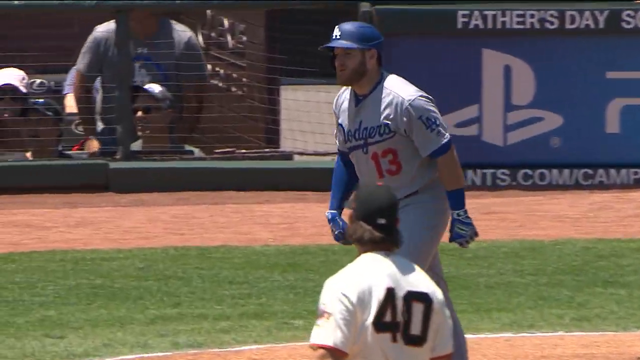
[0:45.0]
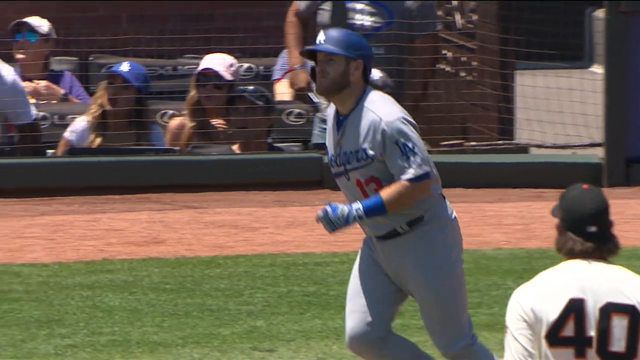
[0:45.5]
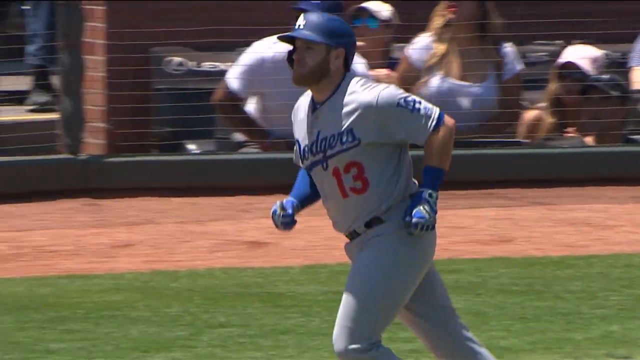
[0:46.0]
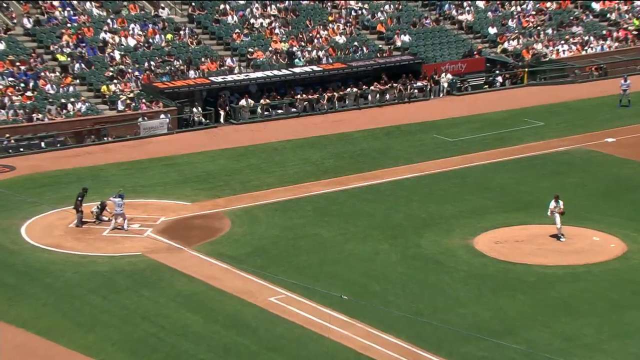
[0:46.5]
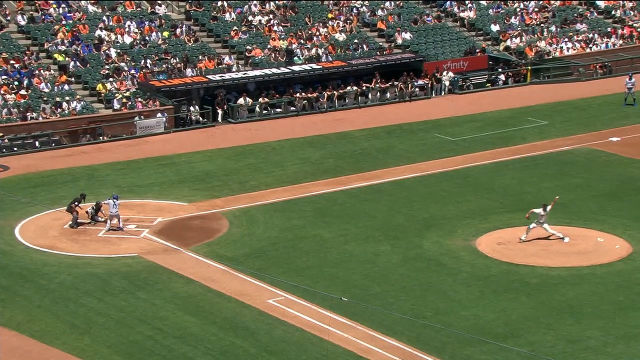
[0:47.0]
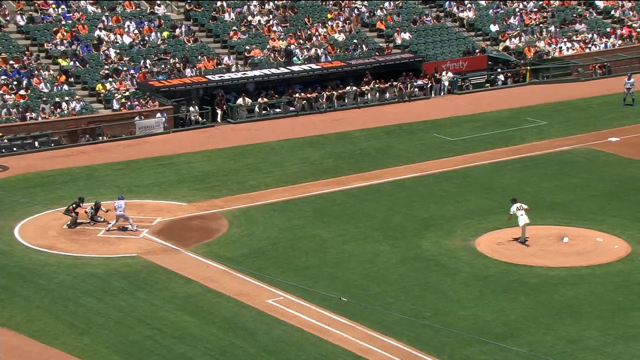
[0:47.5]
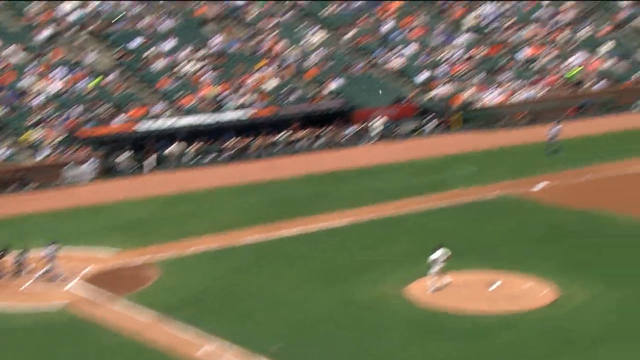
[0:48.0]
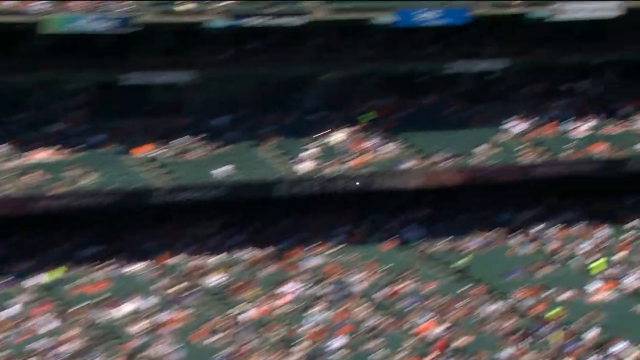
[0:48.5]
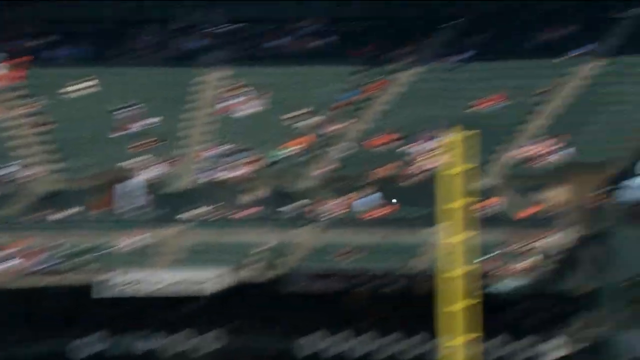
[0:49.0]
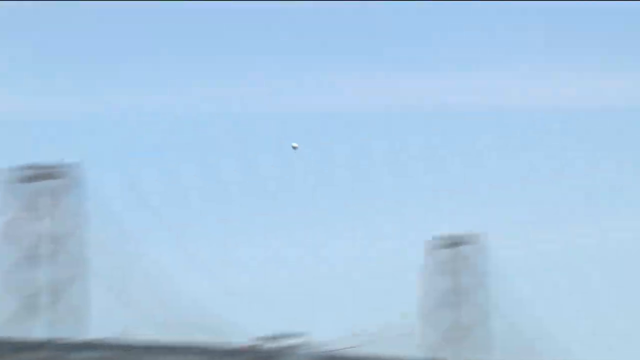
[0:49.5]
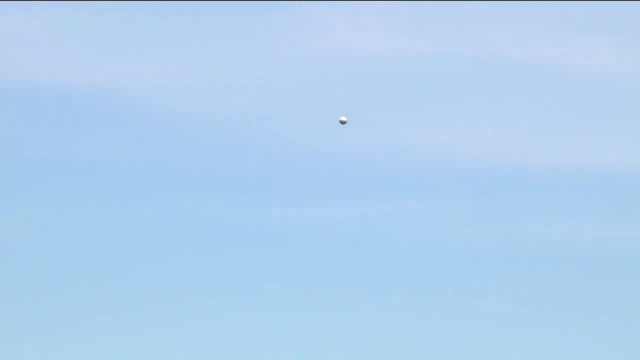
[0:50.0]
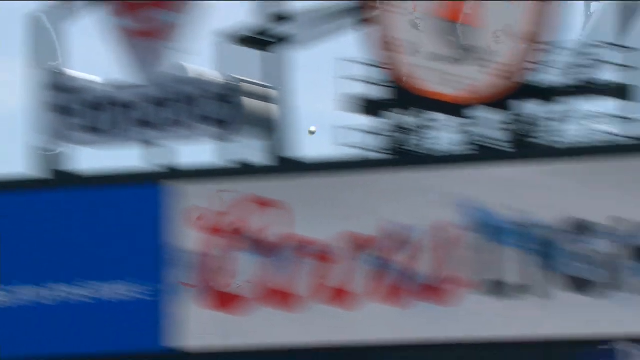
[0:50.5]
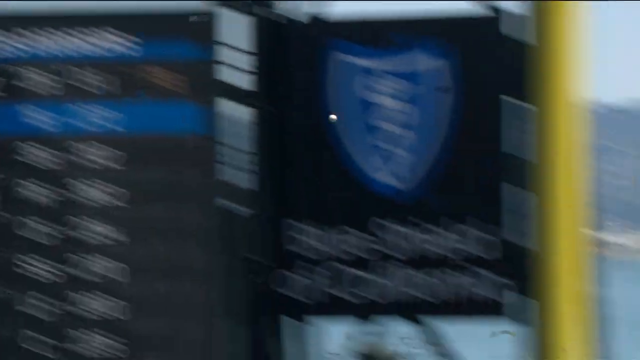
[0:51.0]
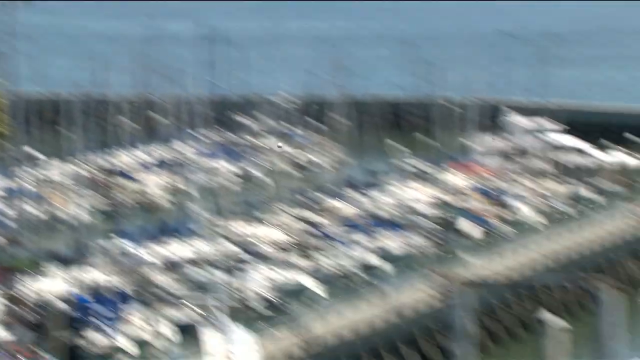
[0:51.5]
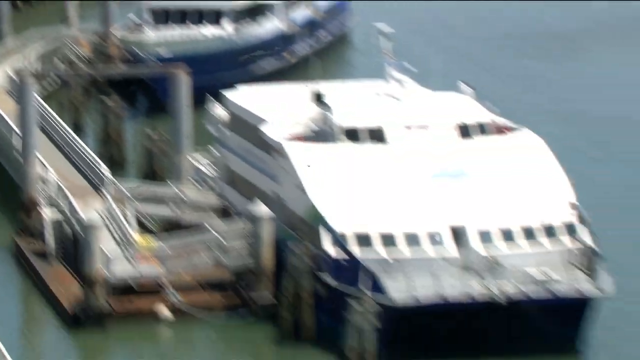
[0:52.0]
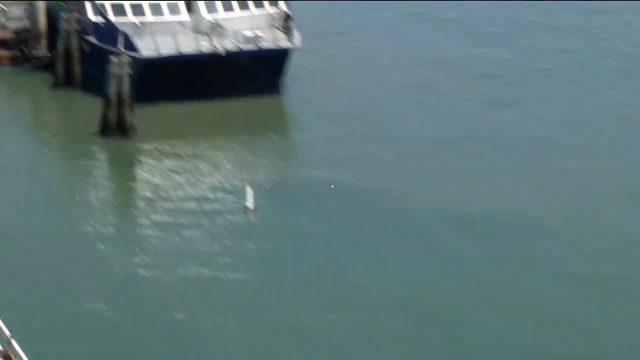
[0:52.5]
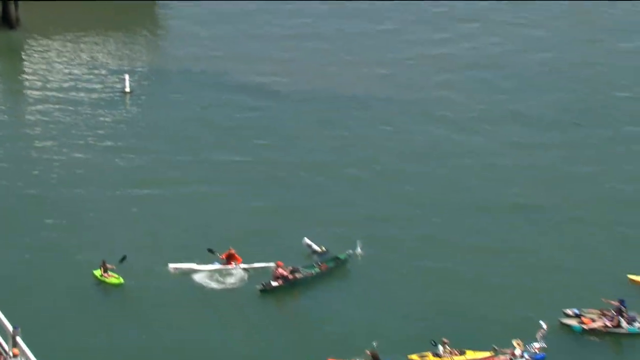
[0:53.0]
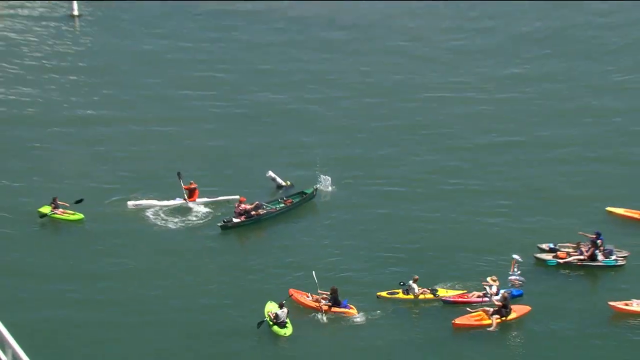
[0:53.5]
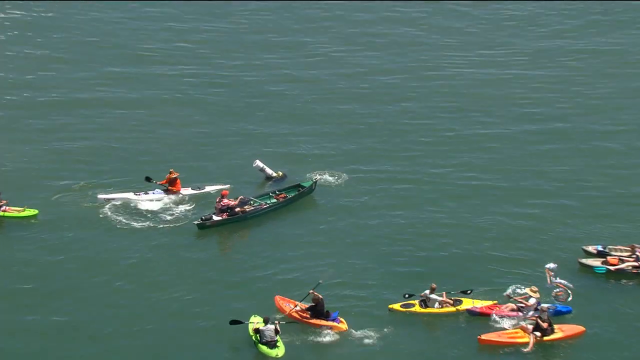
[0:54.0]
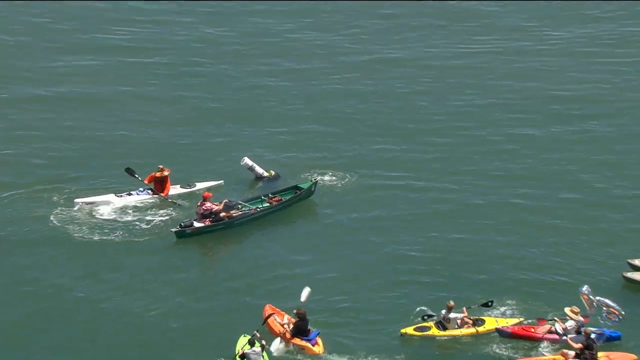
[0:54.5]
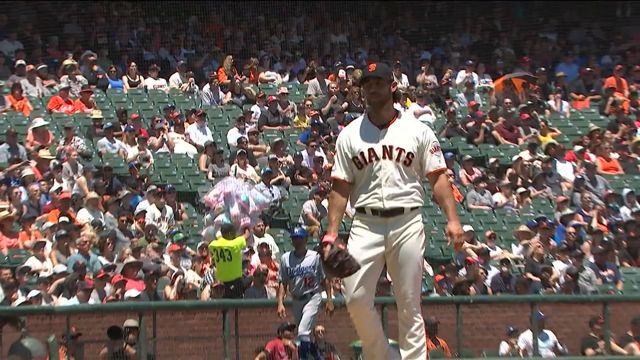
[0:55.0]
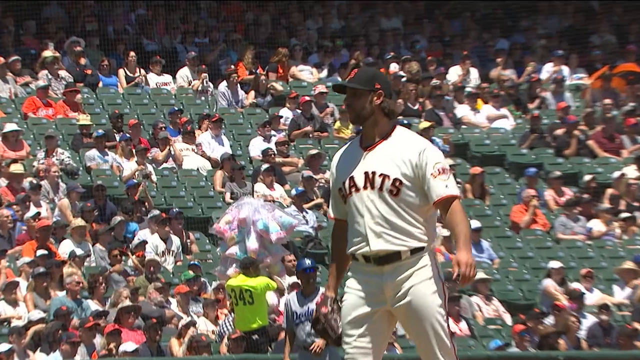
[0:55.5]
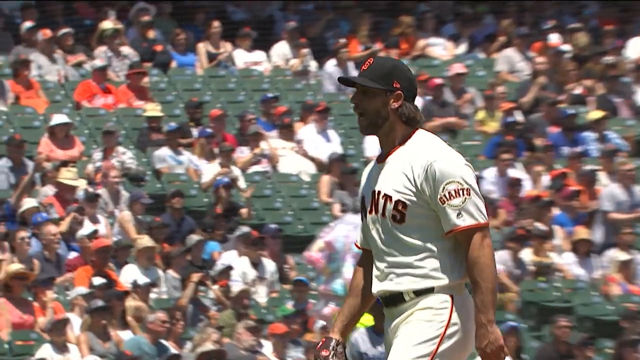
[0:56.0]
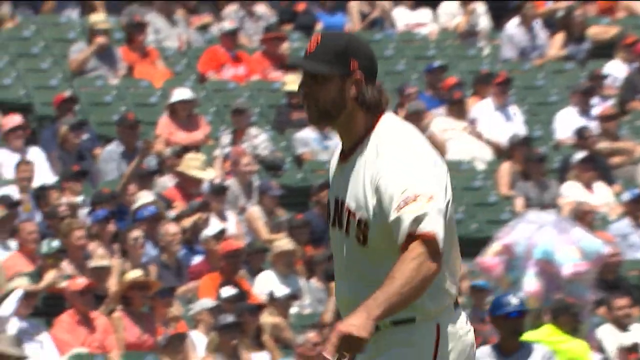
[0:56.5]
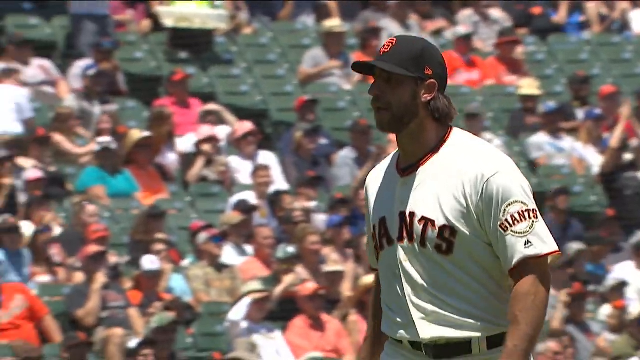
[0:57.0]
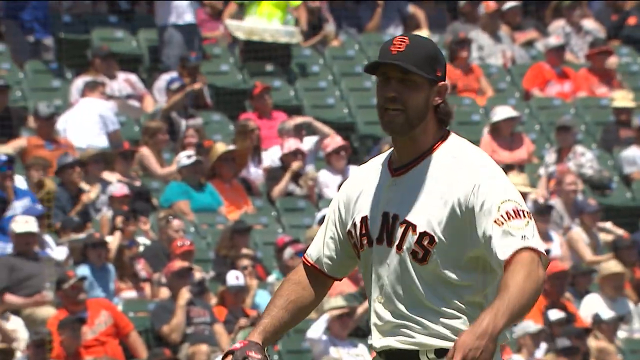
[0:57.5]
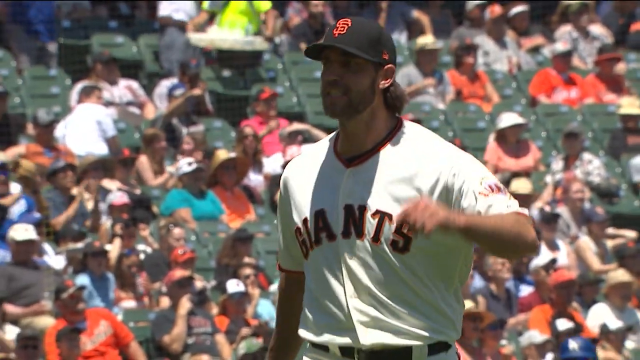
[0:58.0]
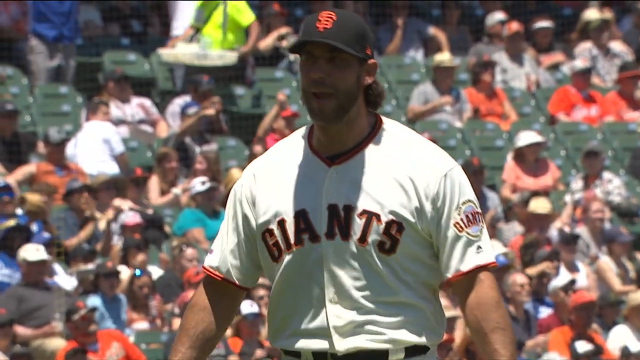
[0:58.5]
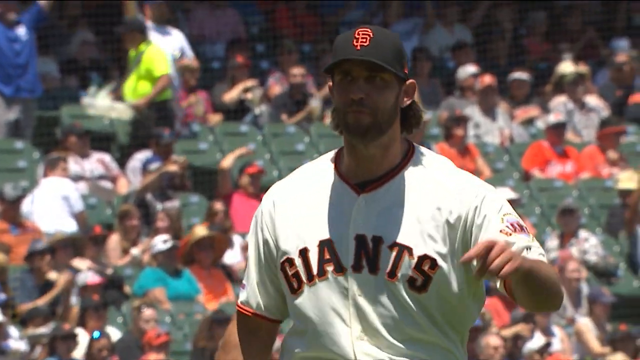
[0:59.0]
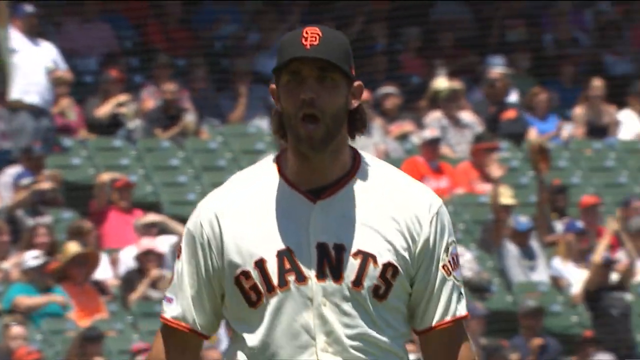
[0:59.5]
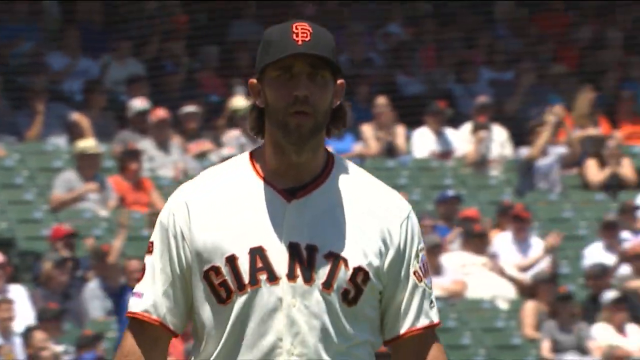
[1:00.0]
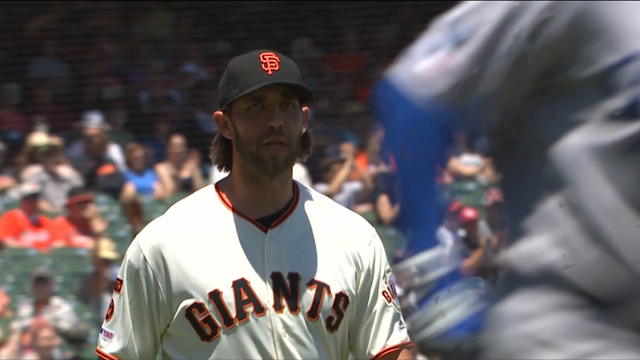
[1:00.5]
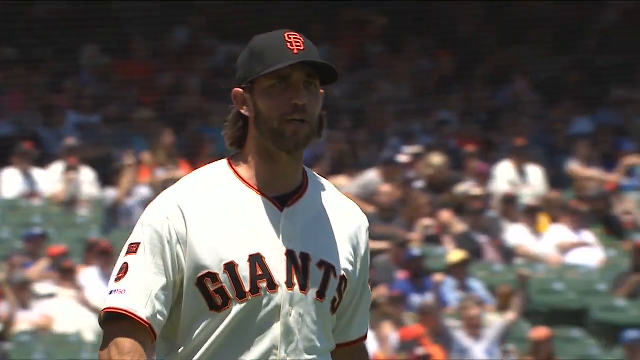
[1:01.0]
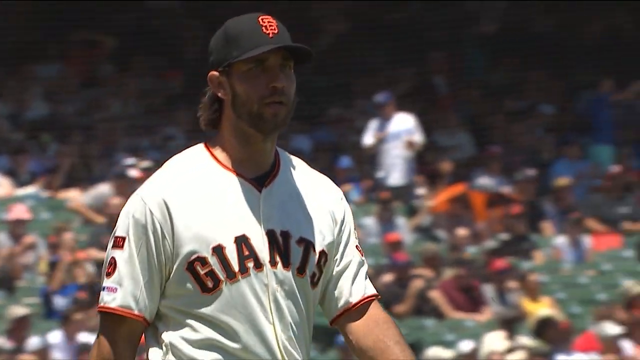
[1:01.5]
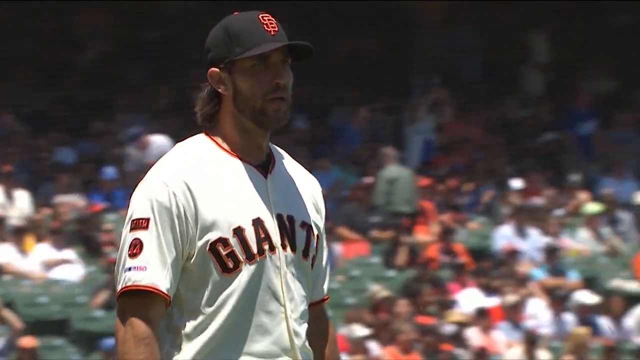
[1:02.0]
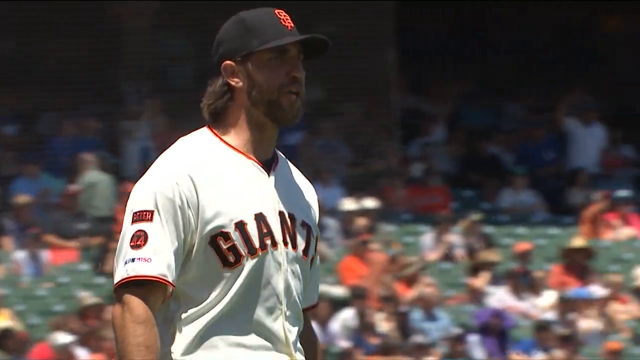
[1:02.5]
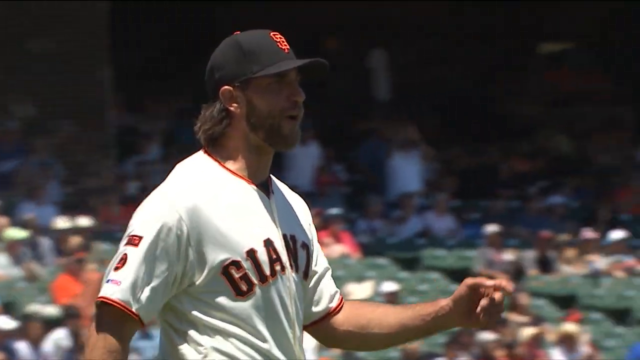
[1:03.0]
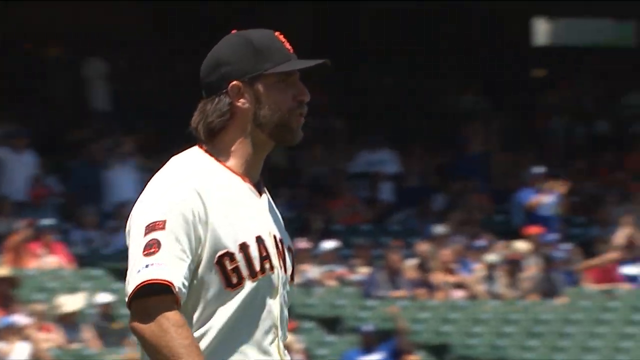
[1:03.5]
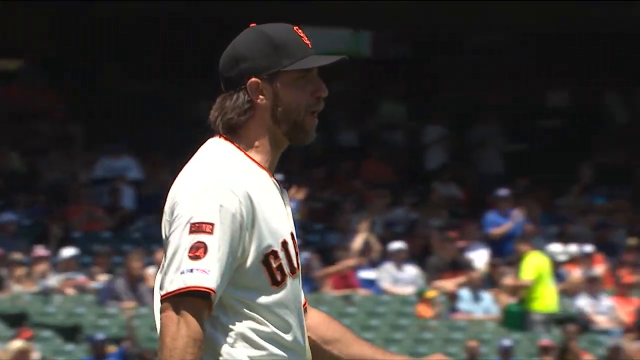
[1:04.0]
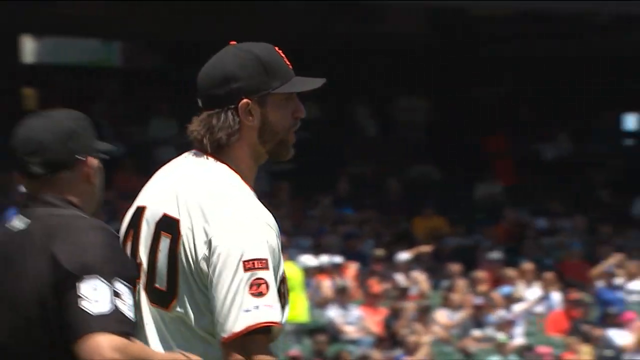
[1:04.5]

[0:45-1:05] The pitch and the hit are shown, with the ball going out into the water again. In a wider shot, all the action on the field is visible and the ball can be followed out of the field and into the water. The San Francisco Giants pitcher, number 40, seems angry: he yells, walks around and gestures. The umpire comes up to him, but nothing really happens yet. The sky is blue with wispy white clouds all over that make it seem hazy. The crowd is pretty thick.